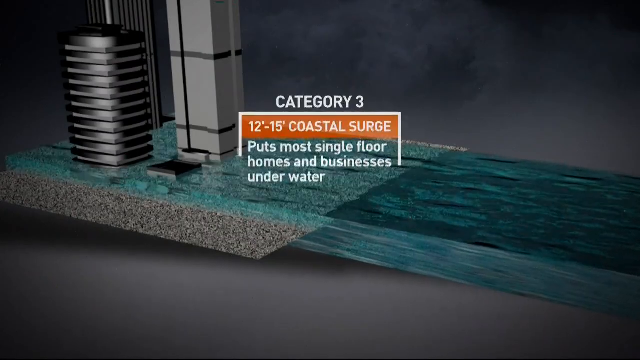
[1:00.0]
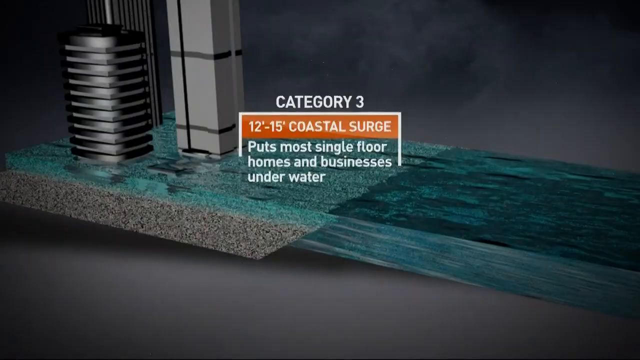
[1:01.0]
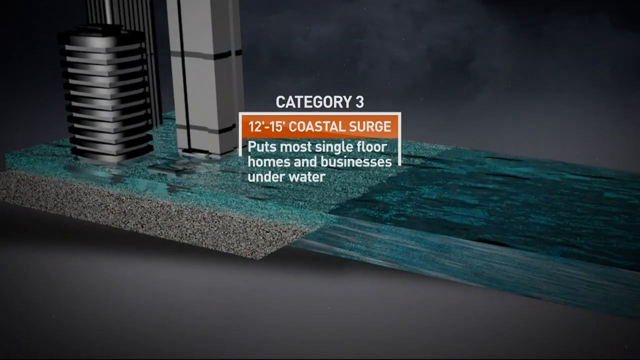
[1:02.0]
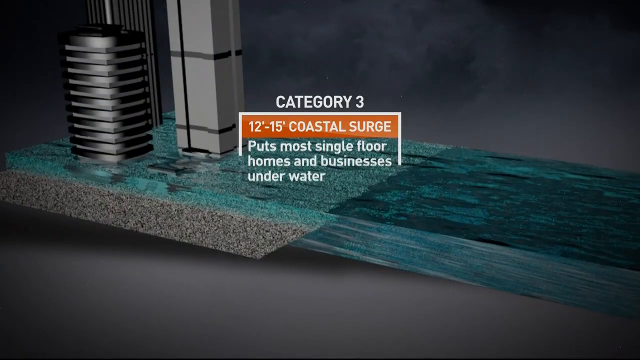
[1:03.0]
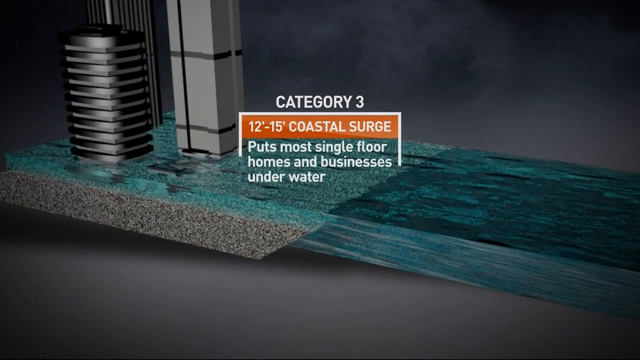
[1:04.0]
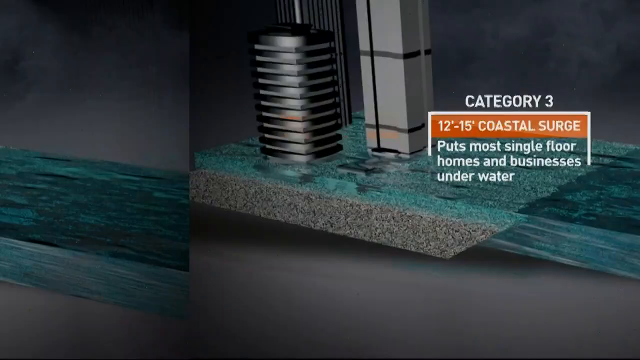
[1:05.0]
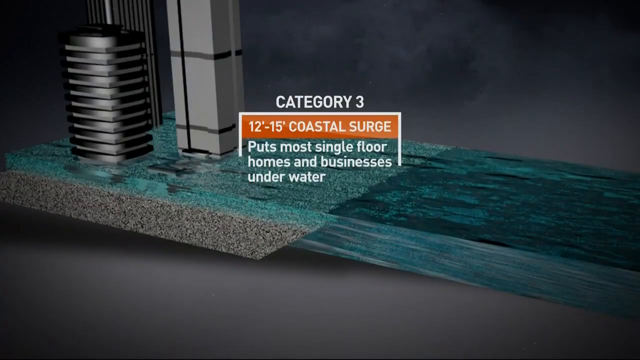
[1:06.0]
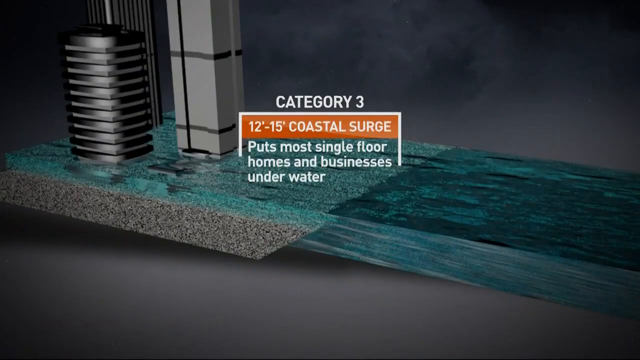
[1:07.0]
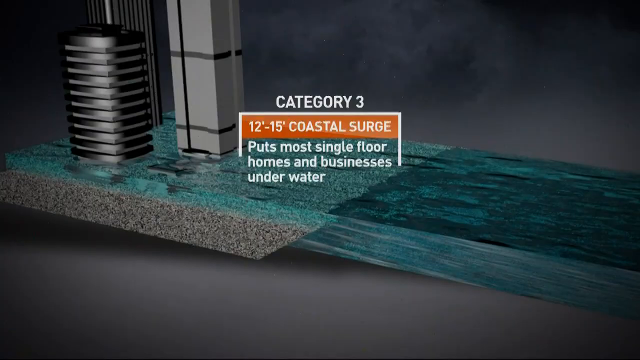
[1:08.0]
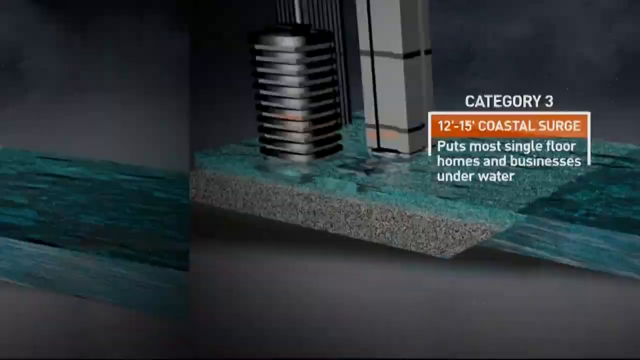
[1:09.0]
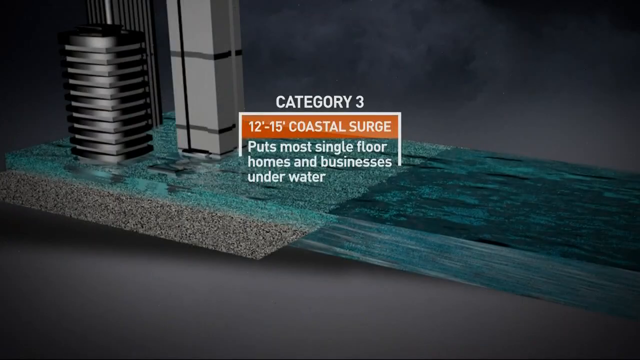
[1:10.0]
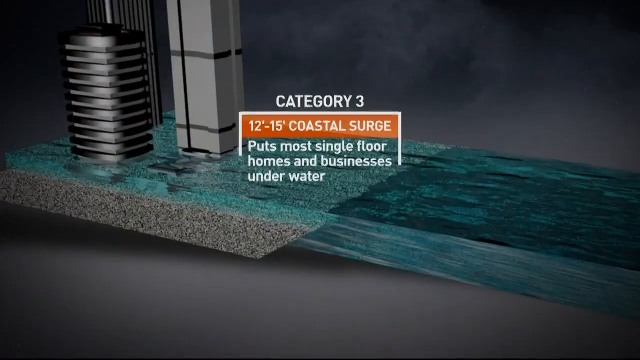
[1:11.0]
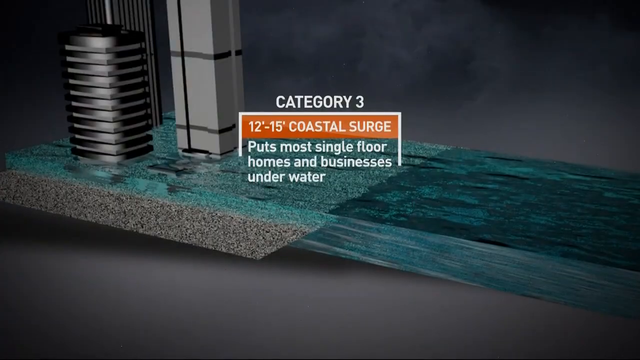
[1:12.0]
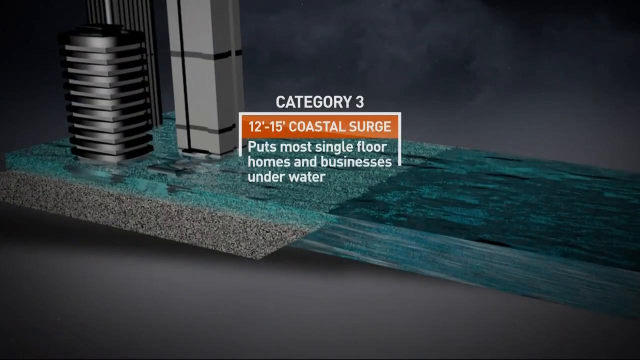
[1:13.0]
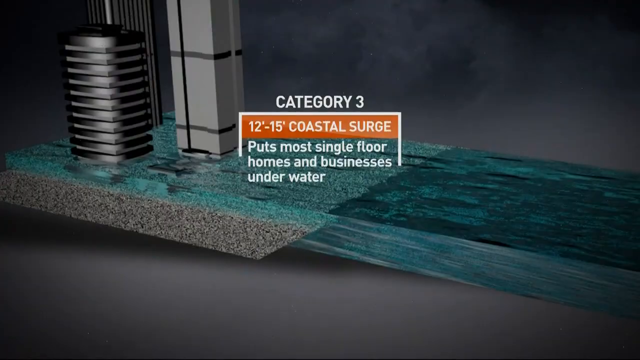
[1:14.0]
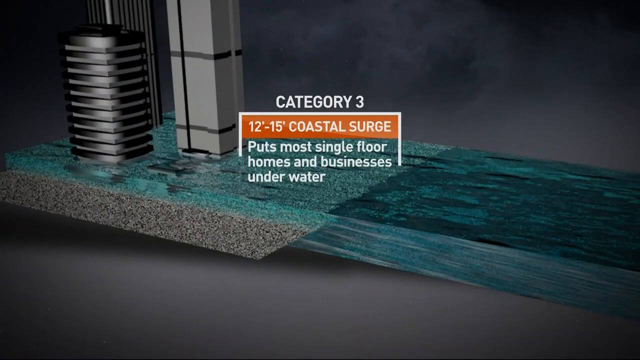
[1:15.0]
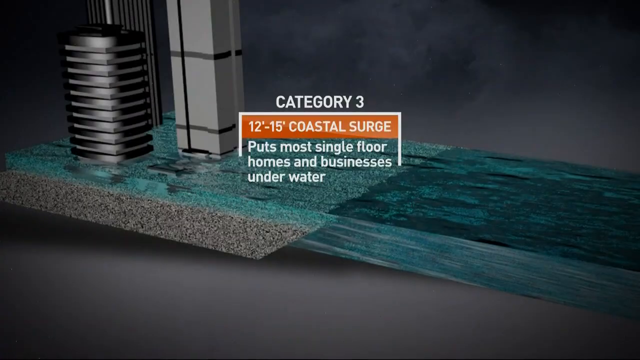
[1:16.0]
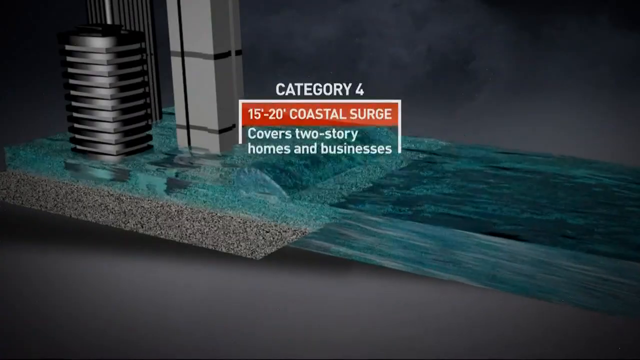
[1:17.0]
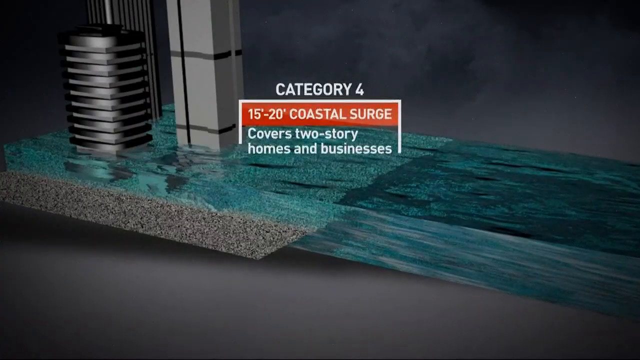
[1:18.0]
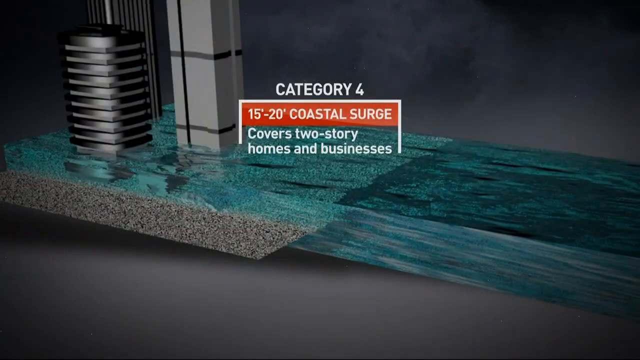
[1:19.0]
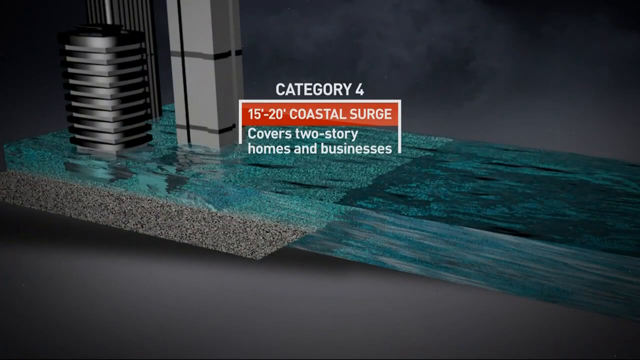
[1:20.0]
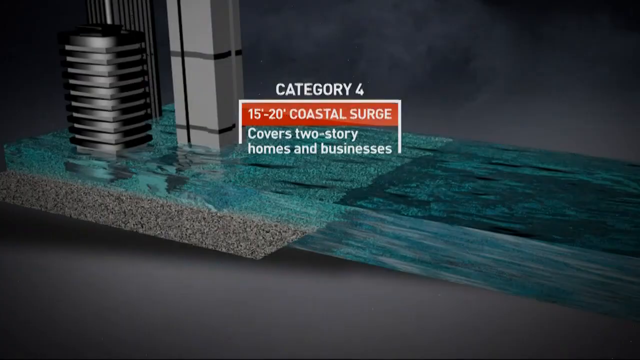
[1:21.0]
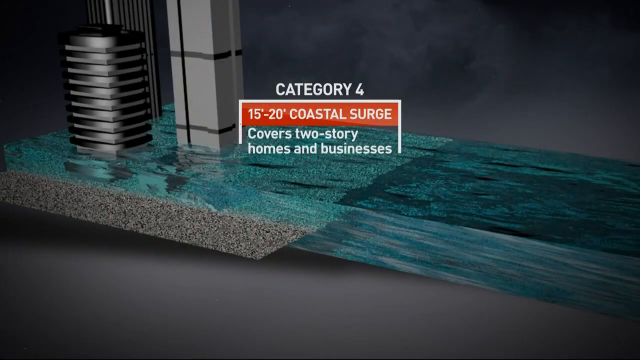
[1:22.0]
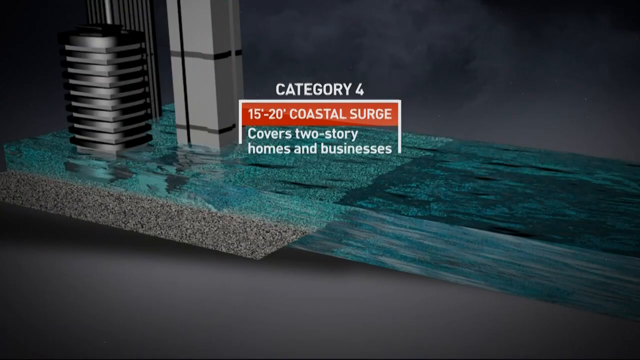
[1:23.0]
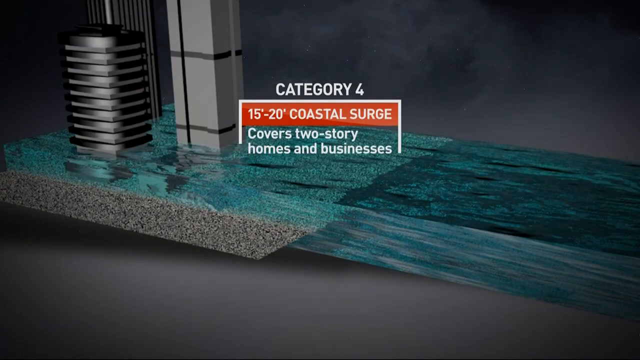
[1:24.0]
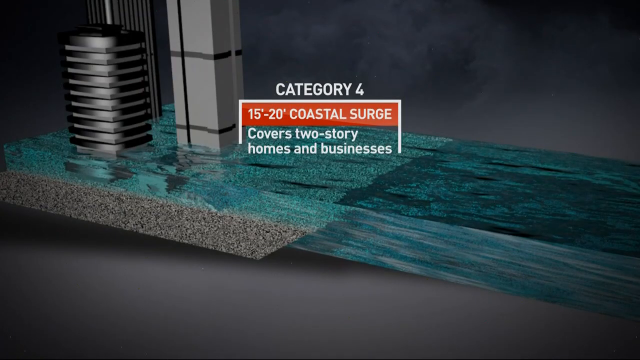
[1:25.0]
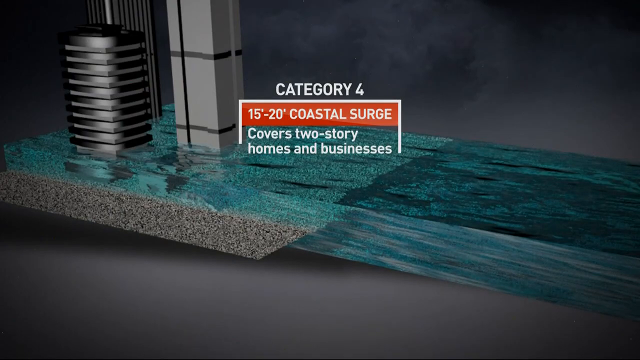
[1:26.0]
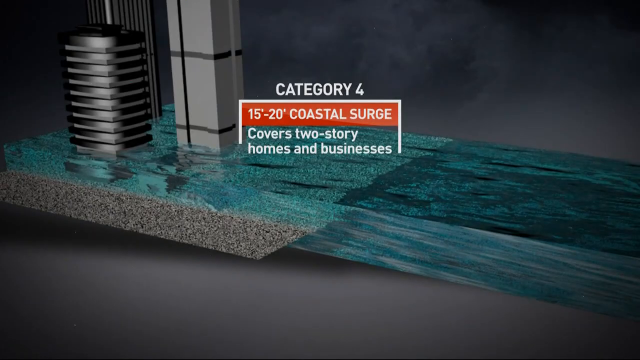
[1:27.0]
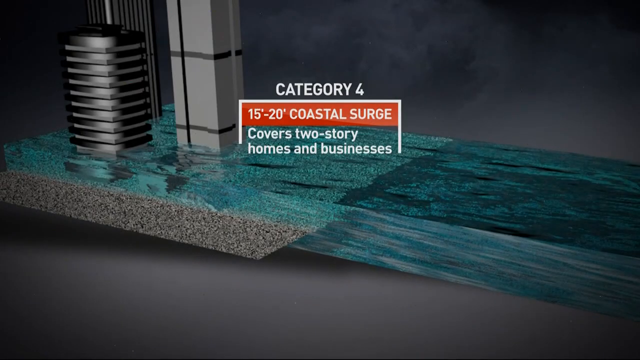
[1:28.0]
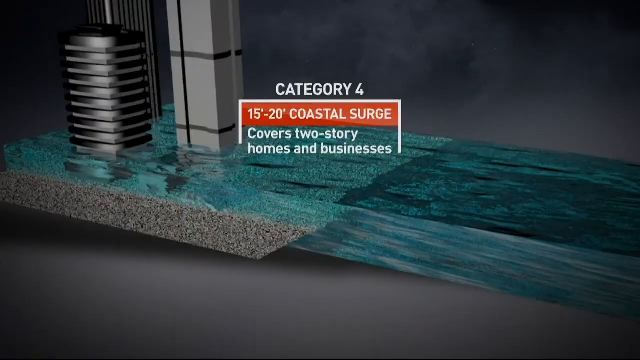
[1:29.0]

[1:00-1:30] Text ending in "businesses underwater" is written on the screen, and the background remains black. A green thing that looks like a carpet rolls from the right side toward the left centre. The bottom of the screen is black, and toward the left side there is what looks like a tarred or carpeted area with black and grey patches. Behind these items are a very dark screen and a grey photo. At the top, "Category 12 to 15 coastal surge" is written, highlighted in orange, with the words in white and black. The words are in the centre of the screen; they flash toward the right and then remain still. The other things on the left side stay still; only the words and the carpet rolling from right to left move.